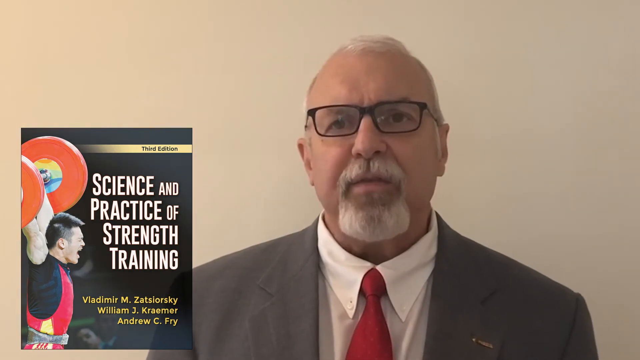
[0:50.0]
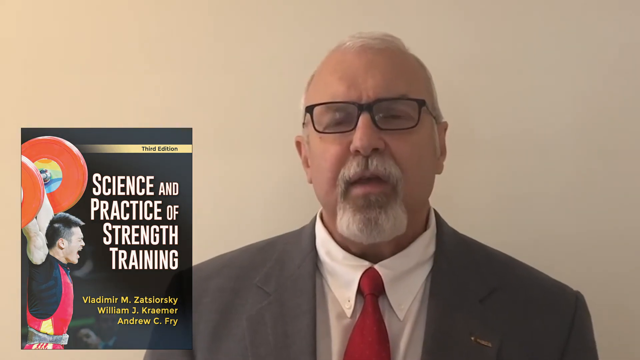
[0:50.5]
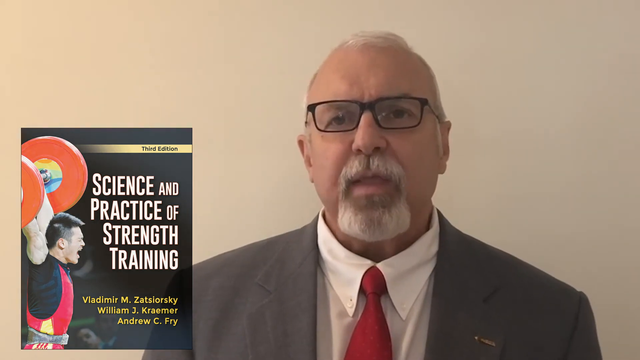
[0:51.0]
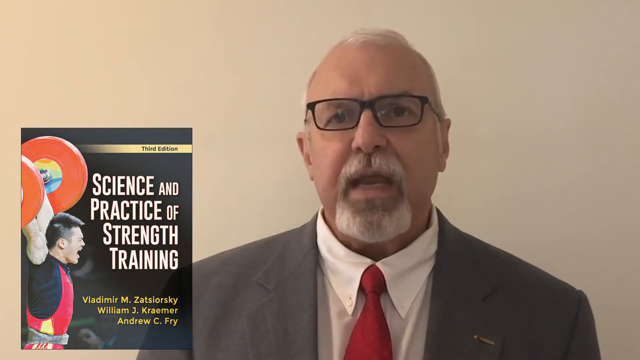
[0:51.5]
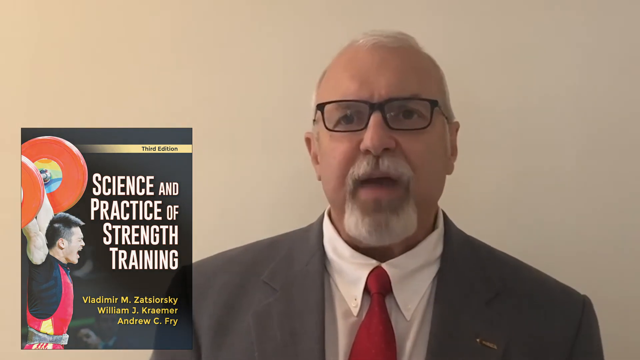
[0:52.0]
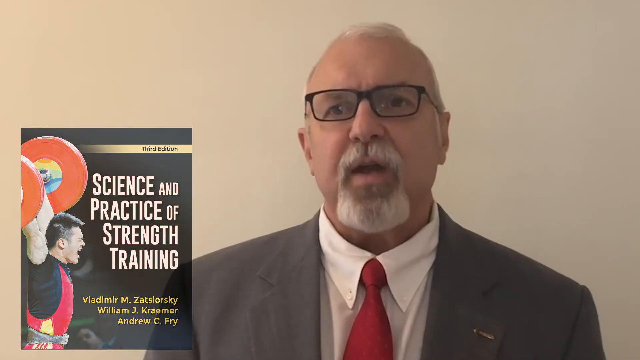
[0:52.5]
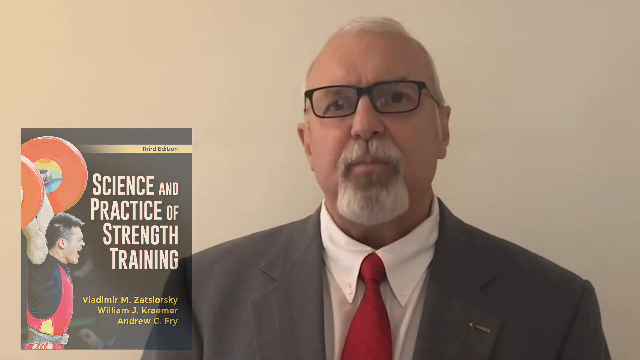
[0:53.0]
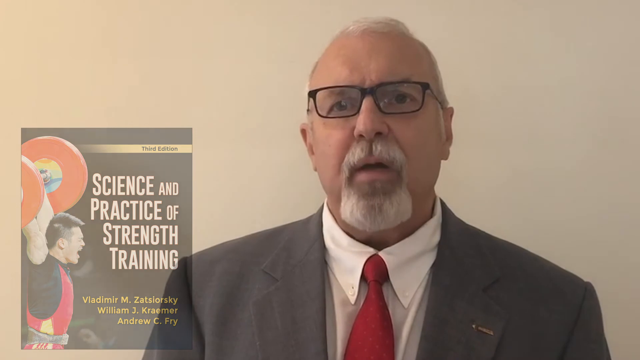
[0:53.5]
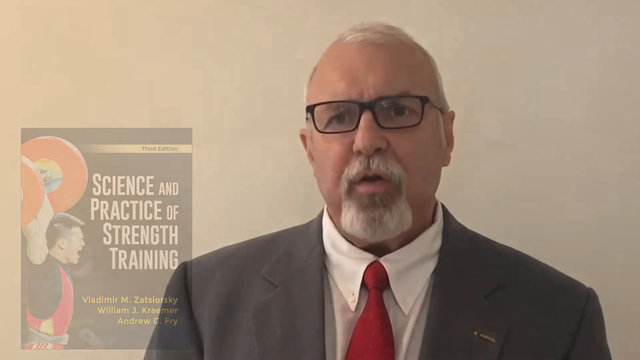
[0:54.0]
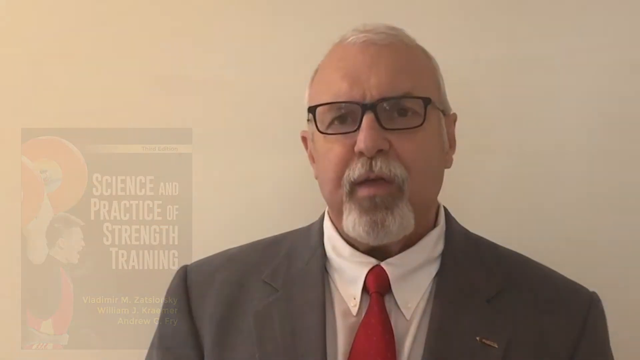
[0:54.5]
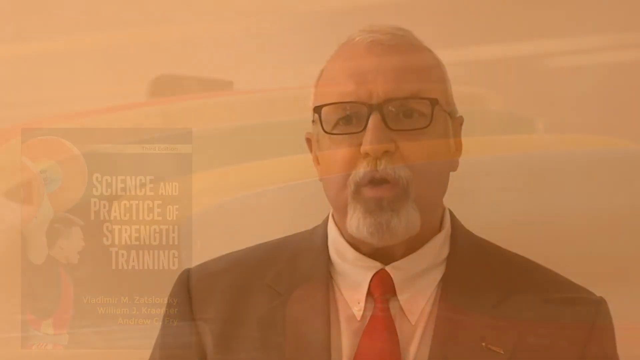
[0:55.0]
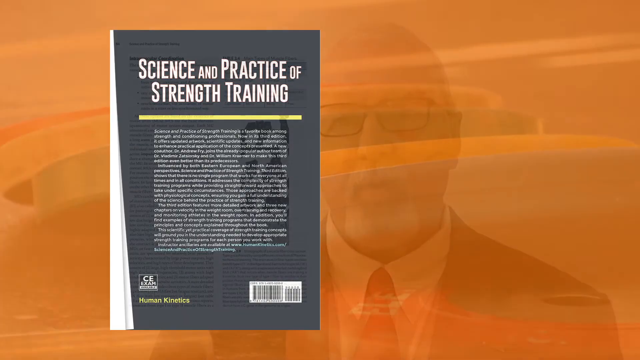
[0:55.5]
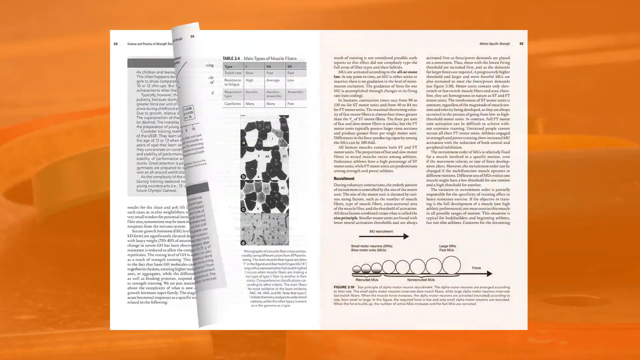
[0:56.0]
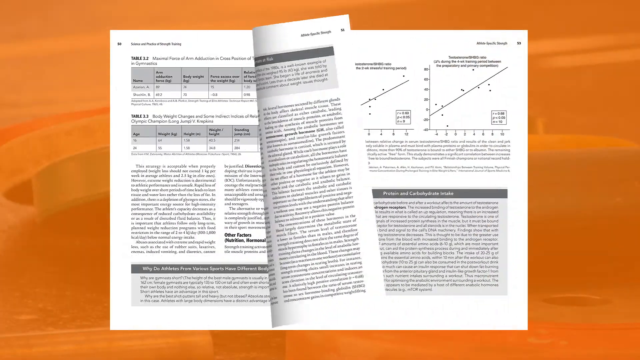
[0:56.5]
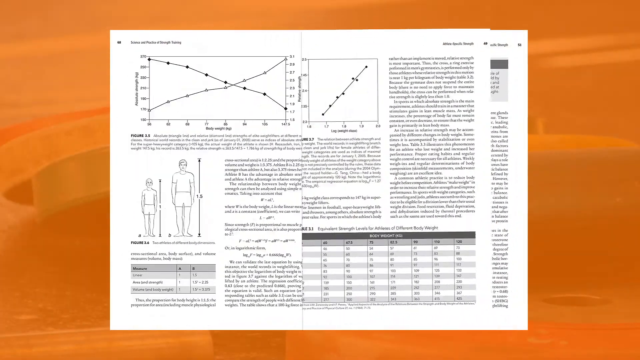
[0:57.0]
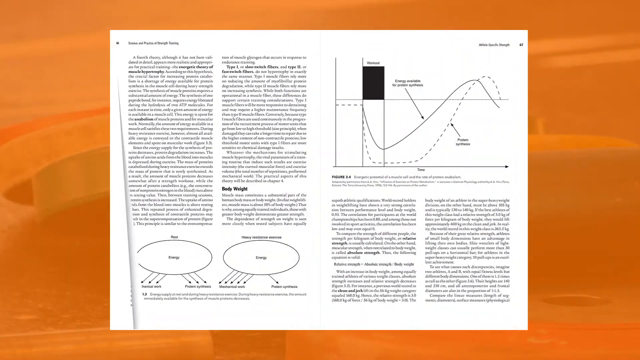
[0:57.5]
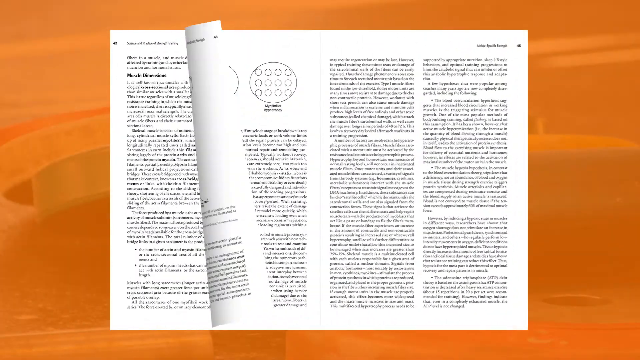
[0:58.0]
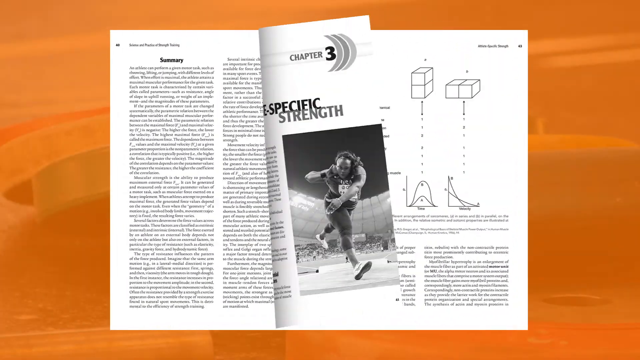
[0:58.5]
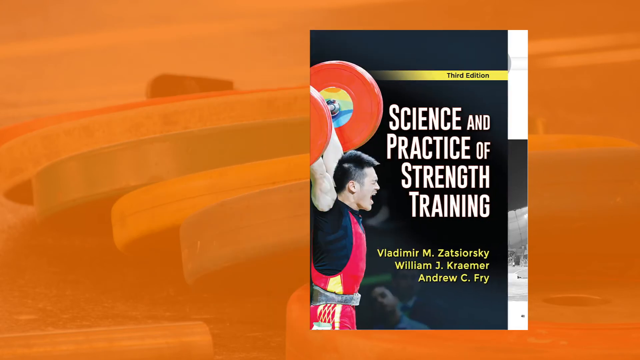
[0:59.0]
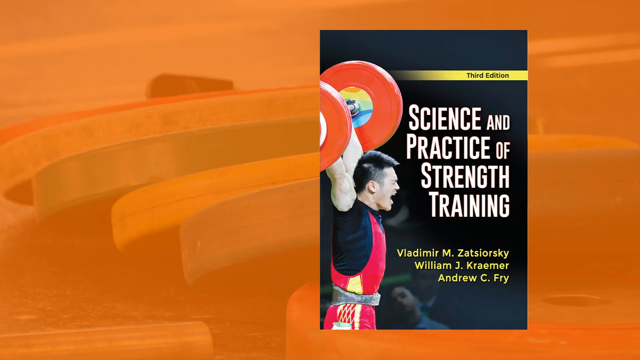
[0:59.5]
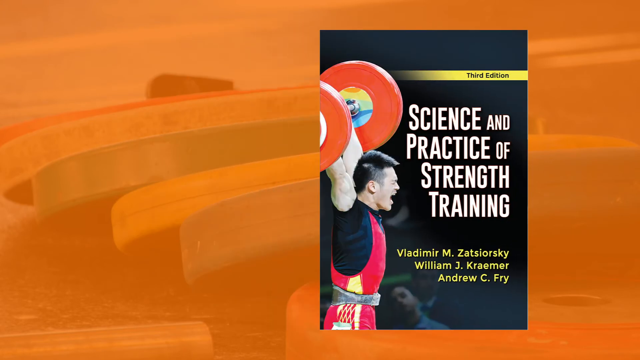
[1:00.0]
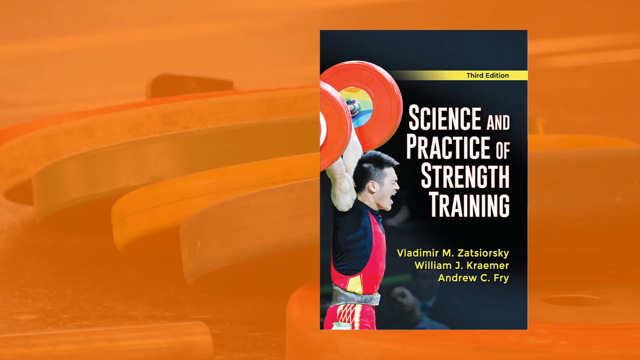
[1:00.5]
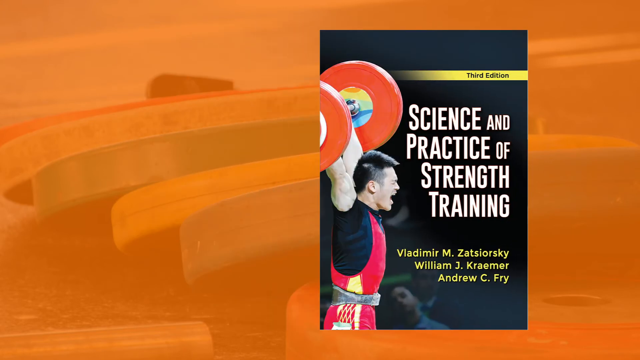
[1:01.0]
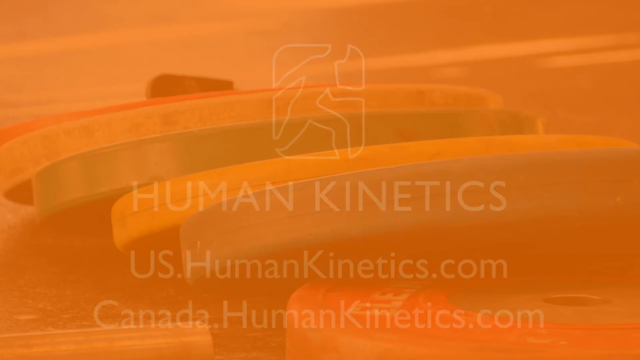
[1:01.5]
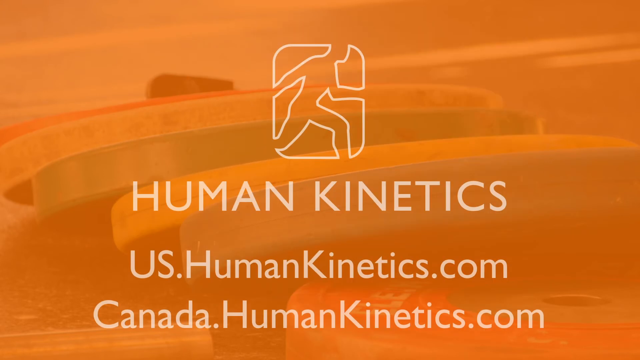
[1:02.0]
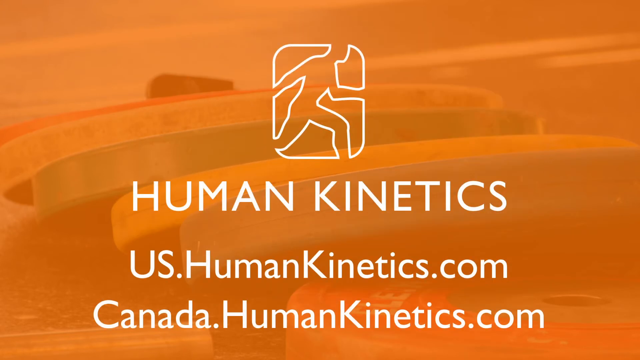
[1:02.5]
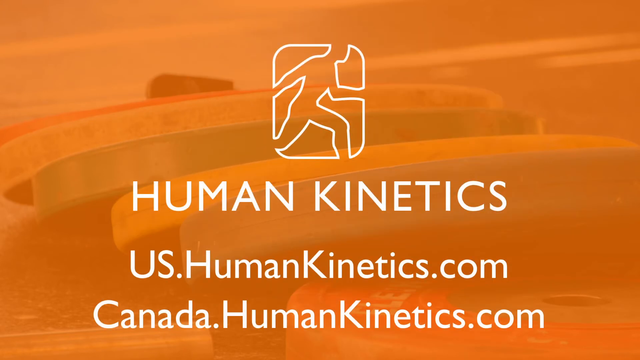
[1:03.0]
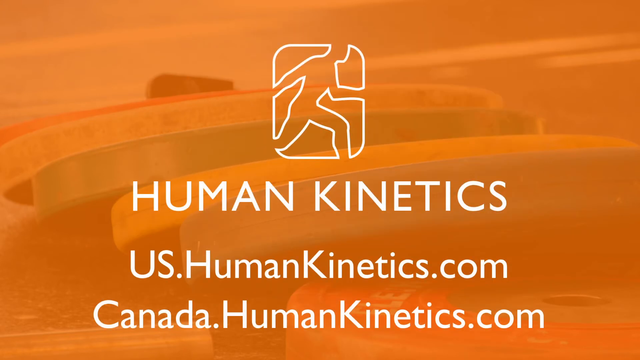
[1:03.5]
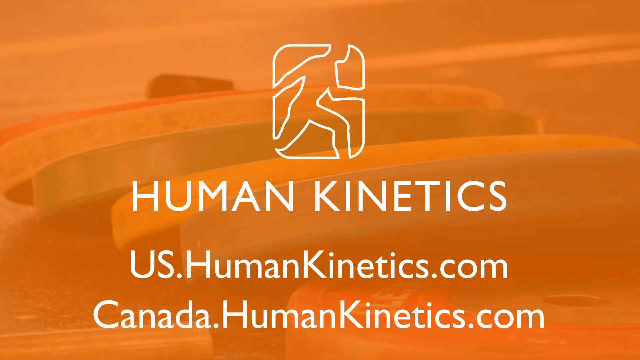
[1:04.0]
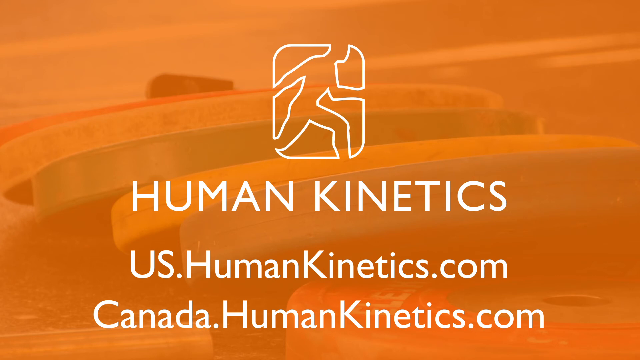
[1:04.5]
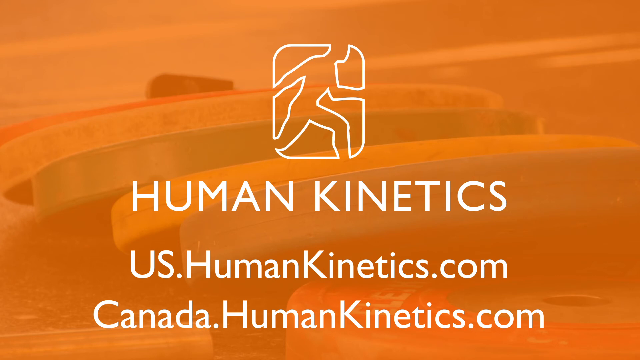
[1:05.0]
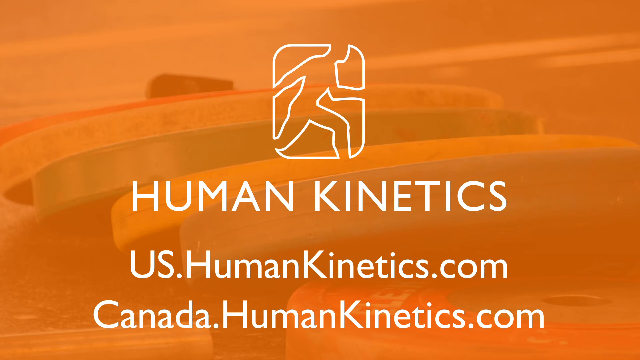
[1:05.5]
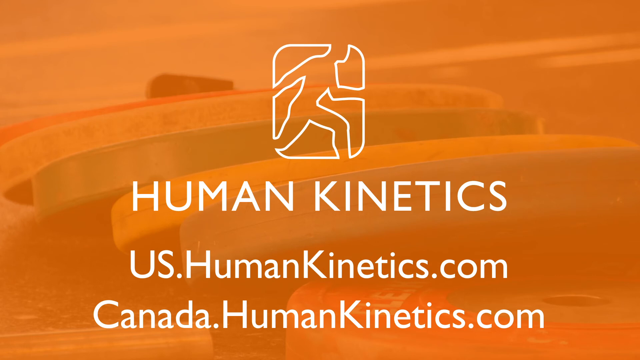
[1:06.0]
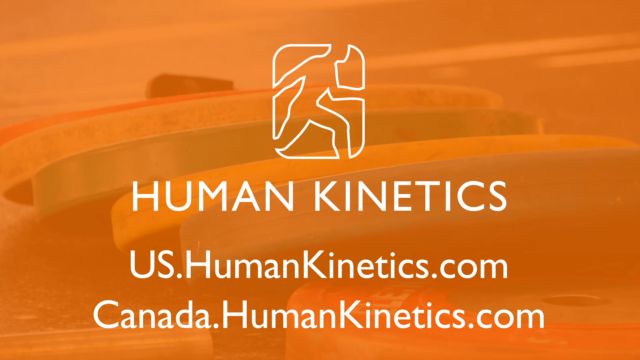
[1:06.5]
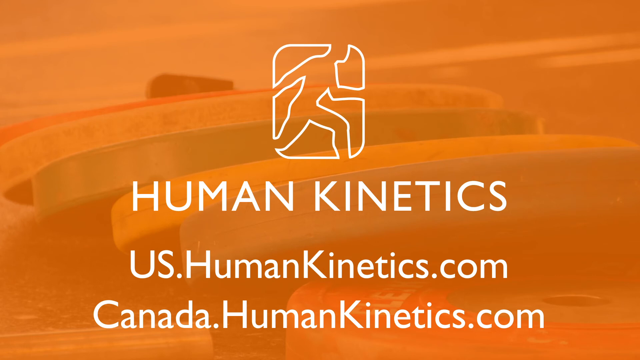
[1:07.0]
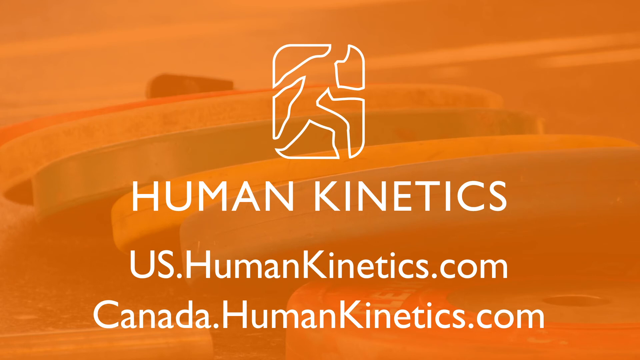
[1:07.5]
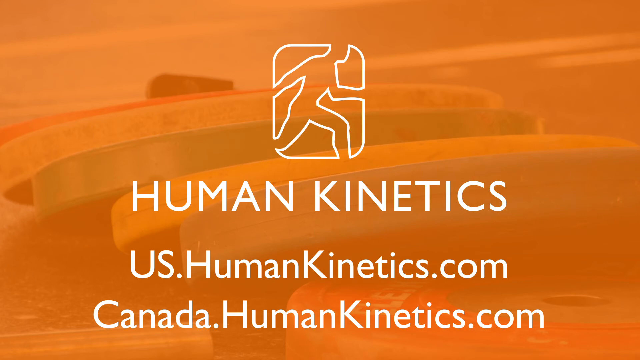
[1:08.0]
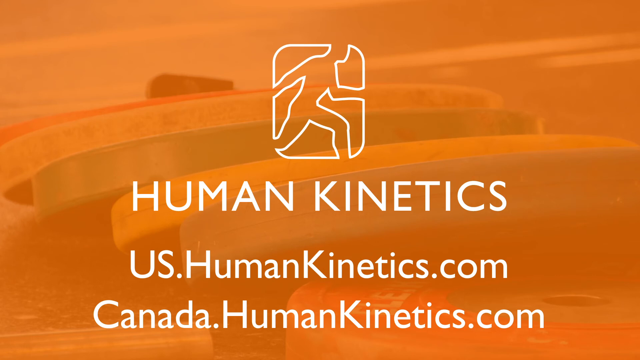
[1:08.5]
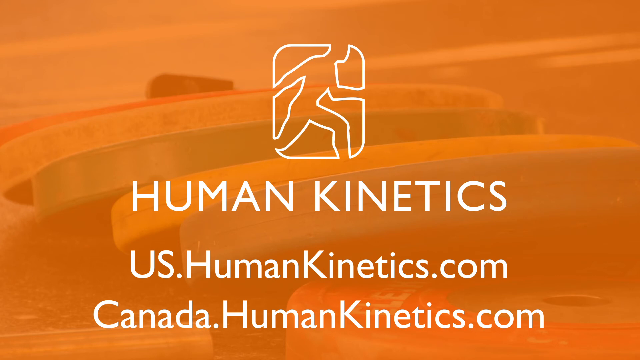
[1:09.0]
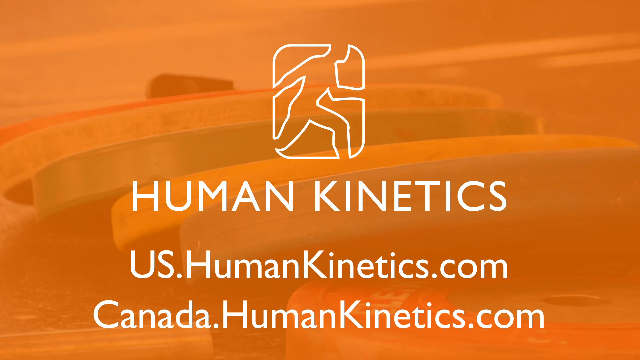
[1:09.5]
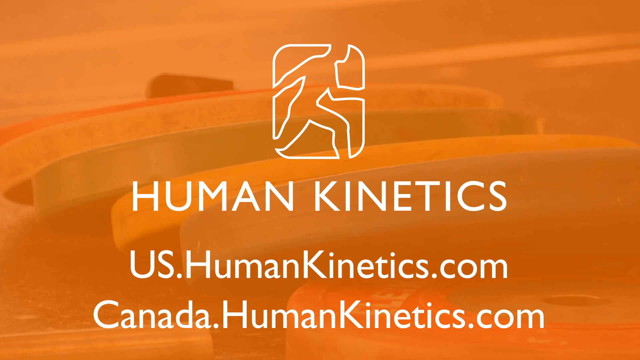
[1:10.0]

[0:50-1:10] An older man with glasses and a beard, in a sort of grey suit, white shirt and red tie, is sort of talking toward the camera. In the bottom left is a sort of book cover reading "The Science and Practice of Strength Training," showing a man sort of lifting an orange barbell over his head. The book kind of fades out of view, and the scene sort of transitions to a sort of image of the book as its pages are flipped through, showing different images and a lot of writing. The book is then shown closed, sort of on the right-hand side of the screen against a sort of orange background. The scene then turns to a sort of logo of a person drawn in lines, with text reading "Human Kinetics," then "US.HumanKinetics.com" and "Canada.HumanKinetics.com."